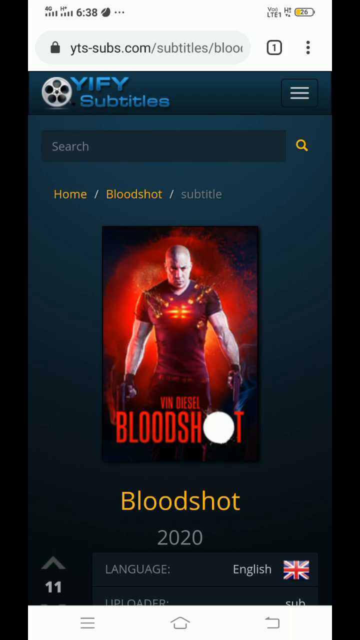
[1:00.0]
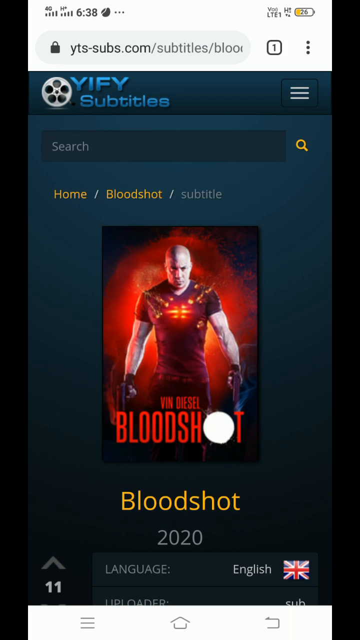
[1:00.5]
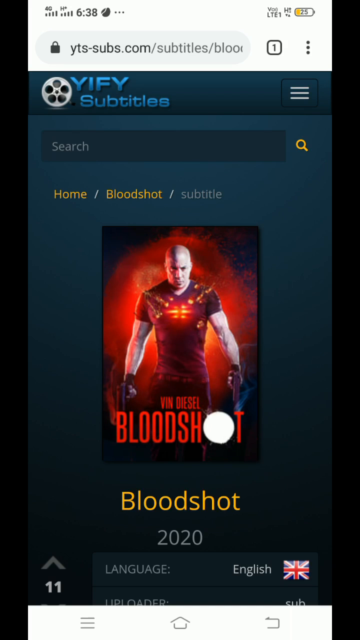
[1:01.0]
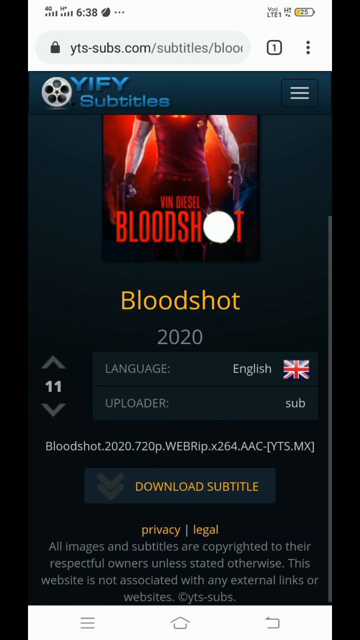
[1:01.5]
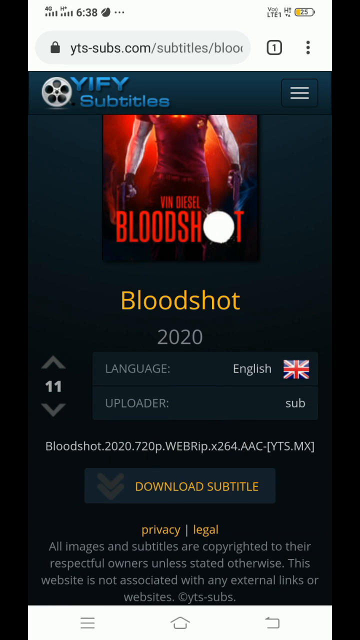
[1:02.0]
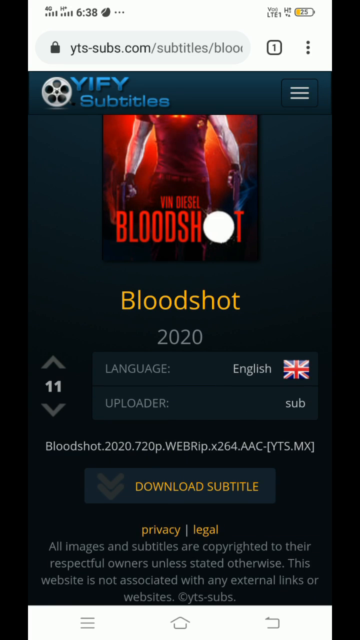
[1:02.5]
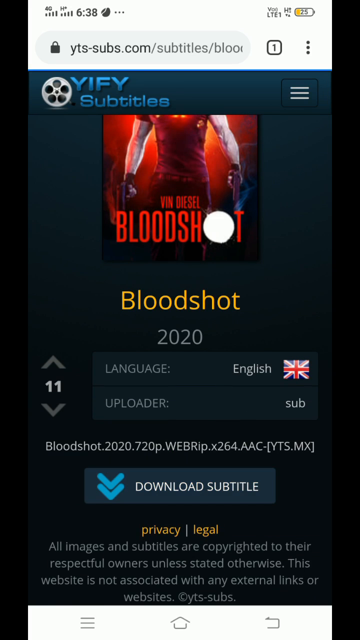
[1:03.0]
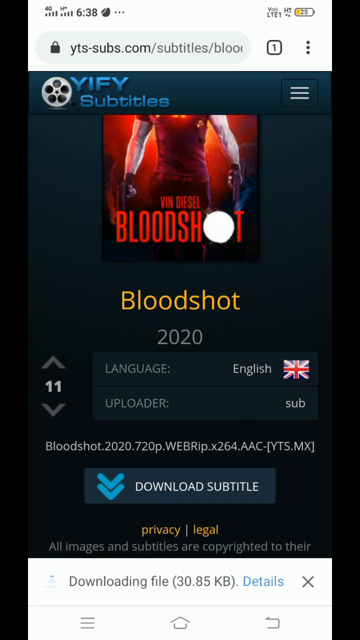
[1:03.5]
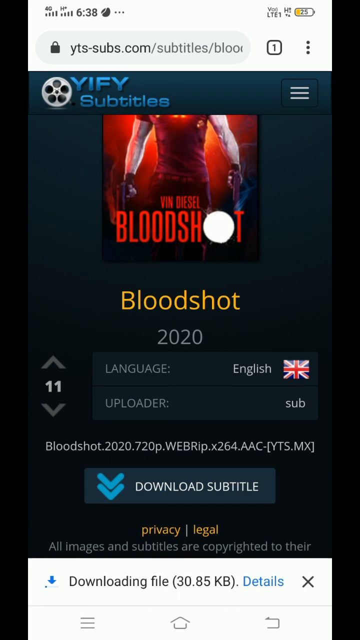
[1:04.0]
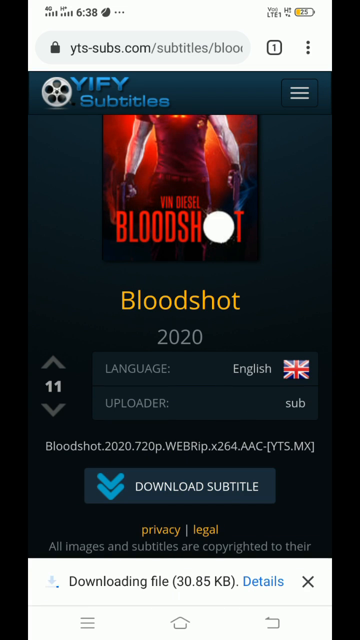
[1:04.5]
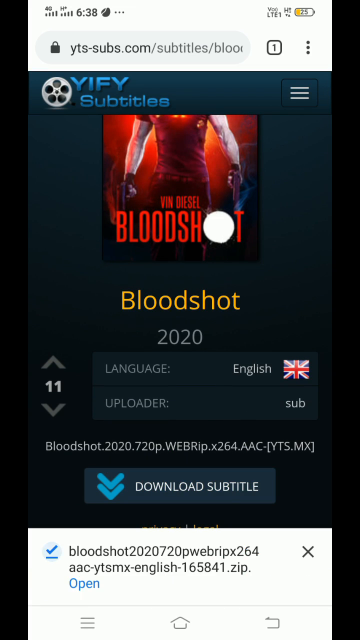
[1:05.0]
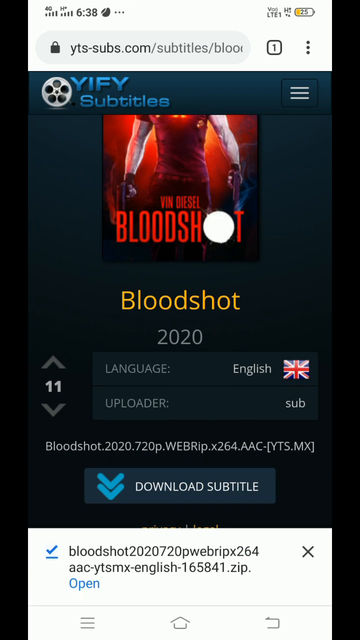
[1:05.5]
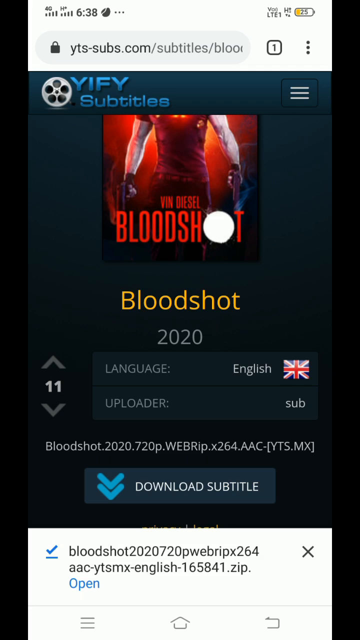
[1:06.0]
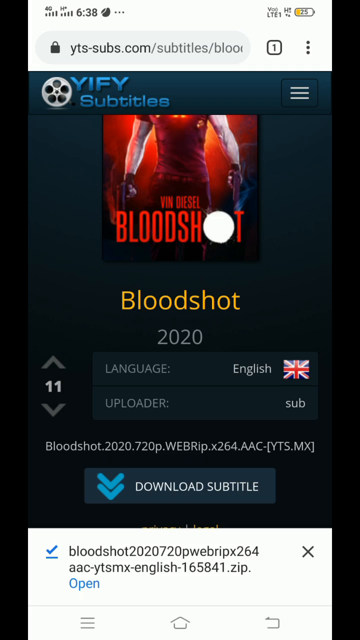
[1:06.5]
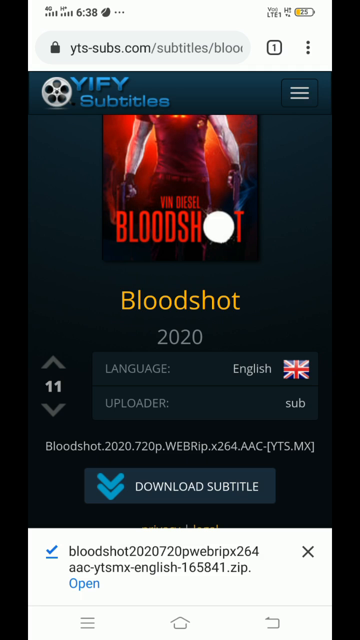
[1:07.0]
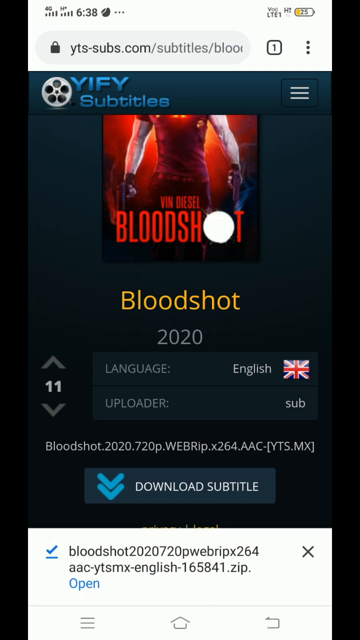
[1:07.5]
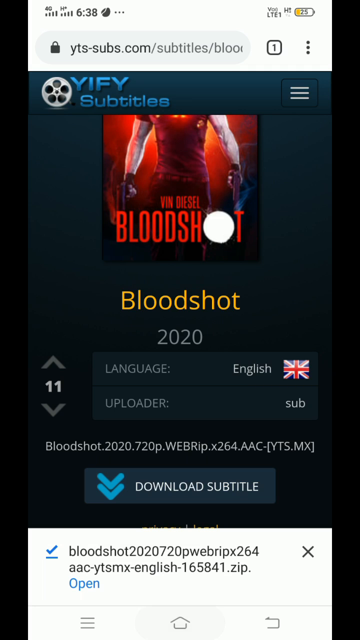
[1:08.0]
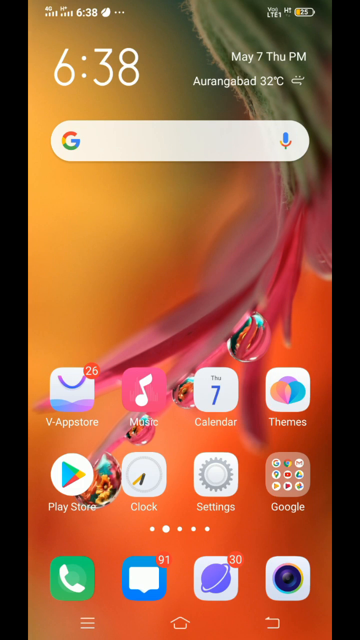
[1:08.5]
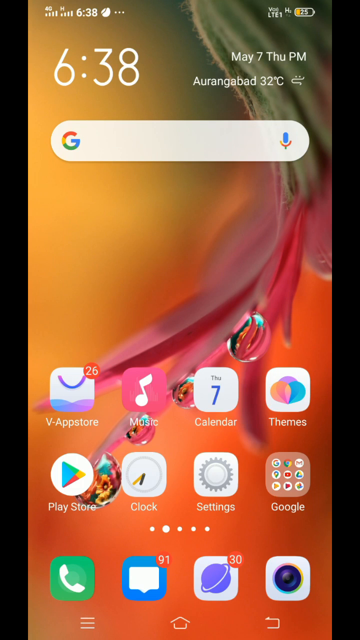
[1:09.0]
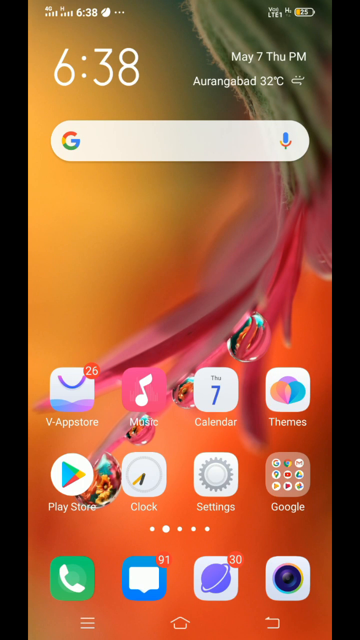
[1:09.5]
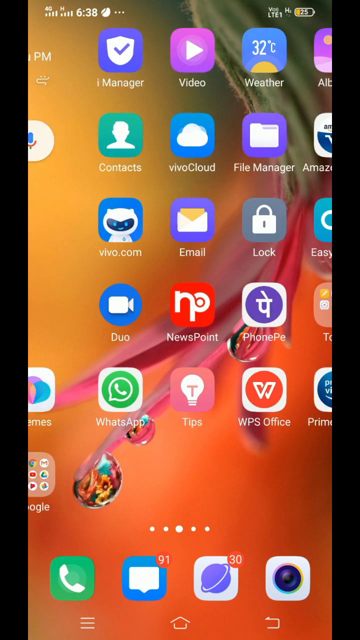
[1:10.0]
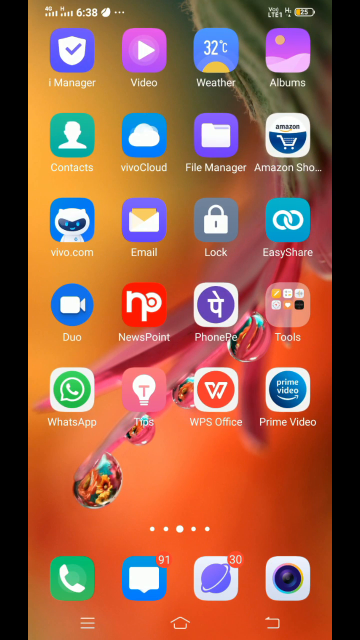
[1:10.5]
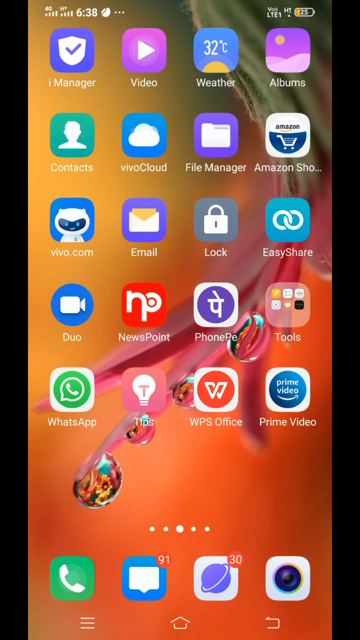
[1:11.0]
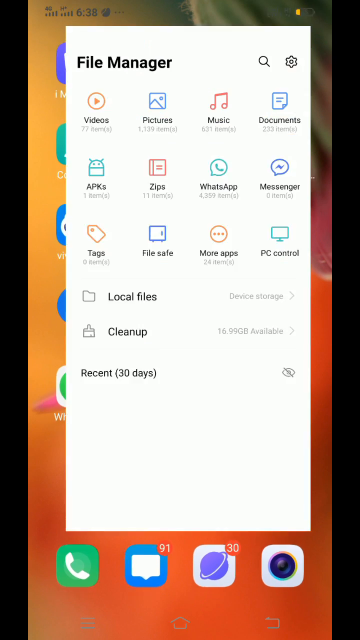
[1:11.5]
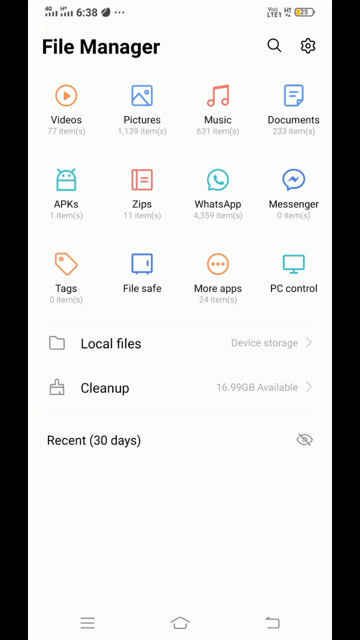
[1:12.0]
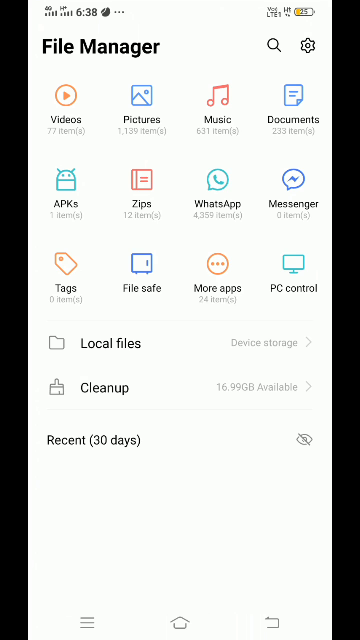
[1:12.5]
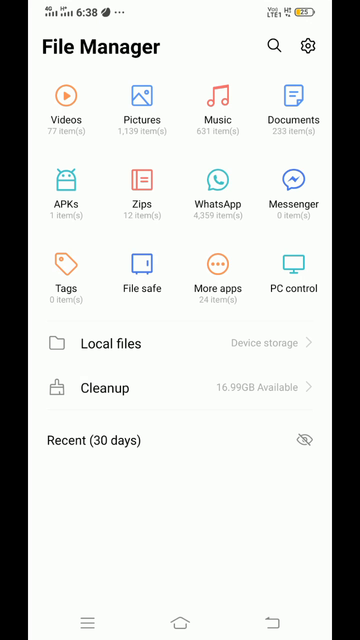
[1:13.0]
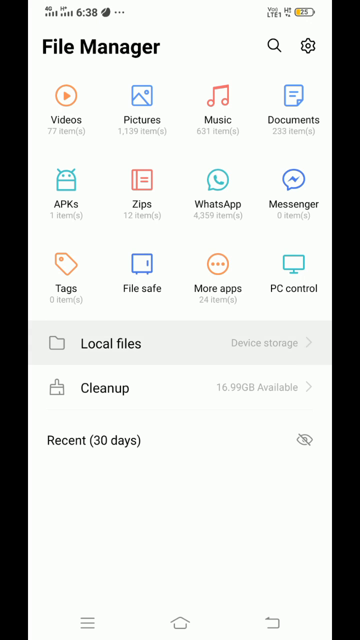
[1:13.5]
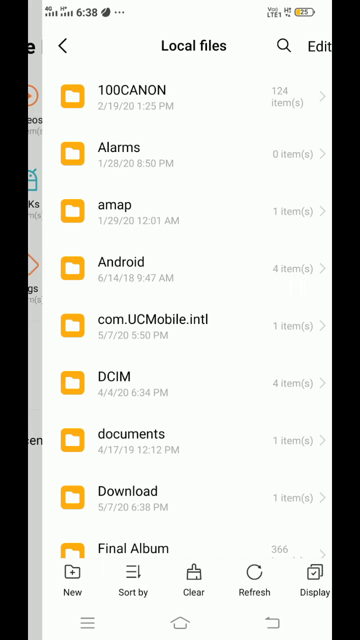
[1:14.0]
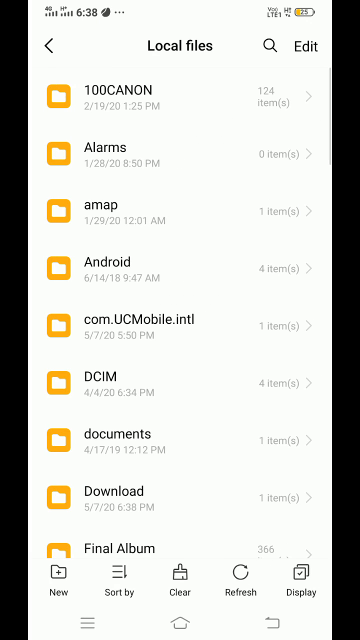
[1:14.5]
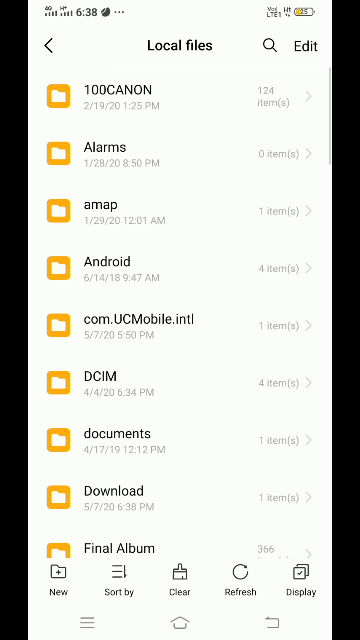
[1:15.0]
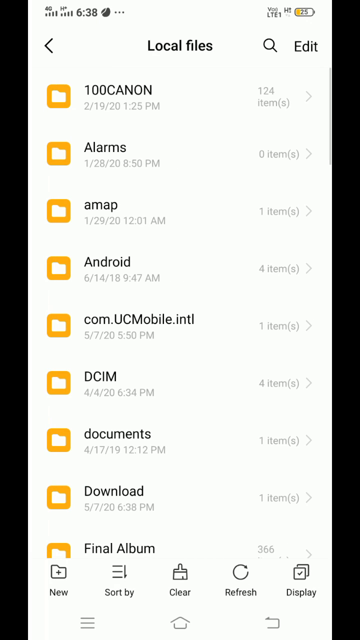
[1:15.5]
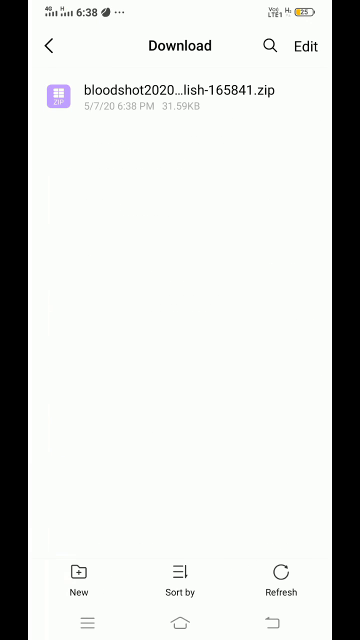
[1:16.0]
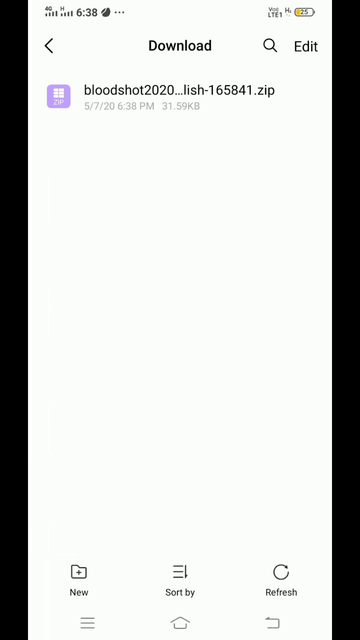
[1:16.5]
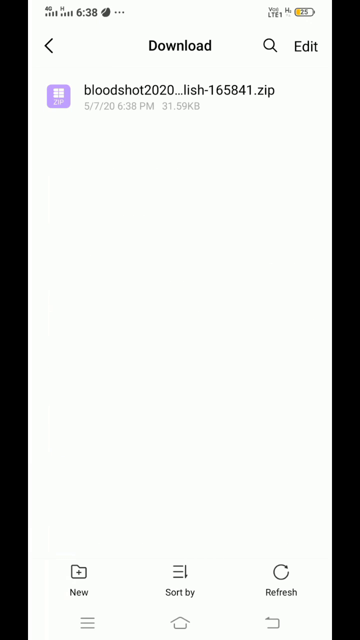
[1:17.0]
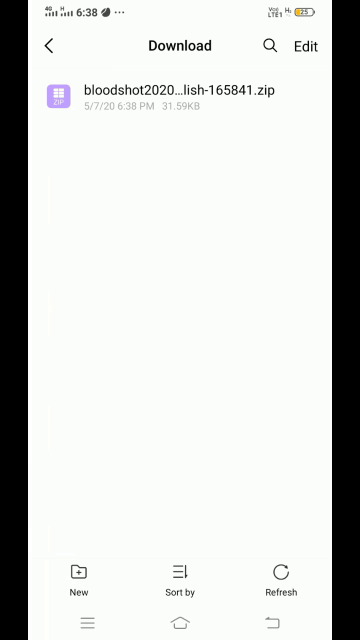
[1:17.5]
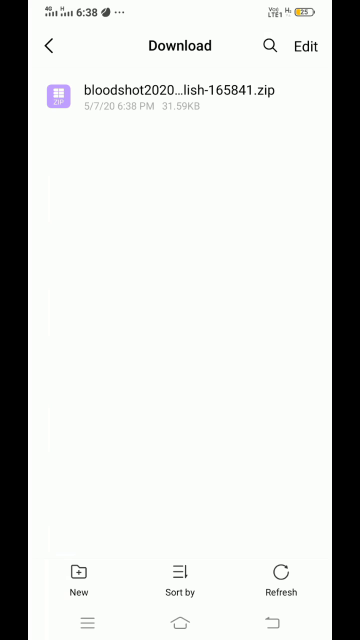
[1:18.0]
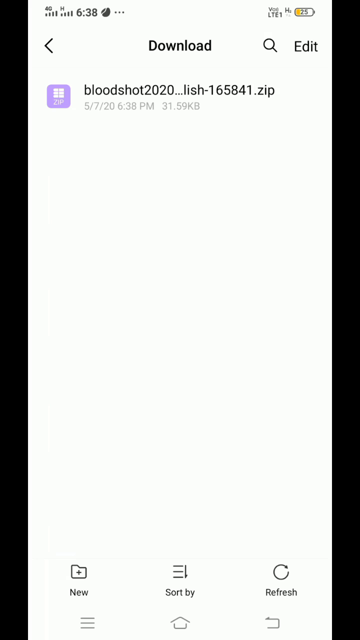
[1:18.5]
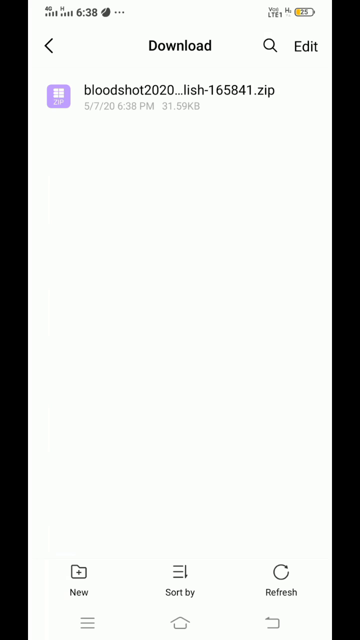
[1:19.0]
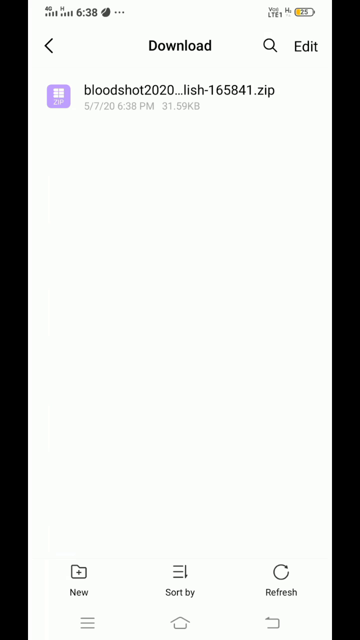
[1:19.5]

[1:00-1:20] The title Bloodshot is shown with the 10x8 poster shot of Vin Diesel, and below it the page scrolls down to show Language, English with the Union Jack flag, and underneath that another horizontal dark blue panel saying 'Uploader: sub'. Beneath this is a filename starting Bloodshot.2020.720p, and underneath that 'Download Subtitle' in yellow writing inside a horizontal dark blue box, followed by a copyright warning. The Download Subtitle box lights up and a white section of screen lifts up from the bottom, in which black text appears saying 'Downloading File (30.85kb) details', with a circle containing a flashing blue down symbol on the left and a horizontal grey bar filling out to the right in front of it. The white section updates to show a small white circle with a blue tick in it; the progress bar is complete, the title of the zip file appears next to it, and a blue 'open file' hyperlink is underneath. The whole screen then minimizes, becoming transparent and disappearing into the middle of the screen, revealing the first home screen of the Android phone. The time at the top now says 6.38. The view scrolls to the second home screen, the first moving left as the second moves in from the right, and the file manager app flashes. The file manager screen opens and the local files option flashes. In local files, the list of files runs vertically with file icons on the left inside yellow circles and their titles to the right. The 'download' folder title flashes, and the download screen appears, all white with 'download' written at the top and a magnifying glass and 'edit' to the right. Below is a filename written in black, bloodshot2020, with a zip file logo to the left, displayed as a lighter square image with zip underneath it inside a purple box.